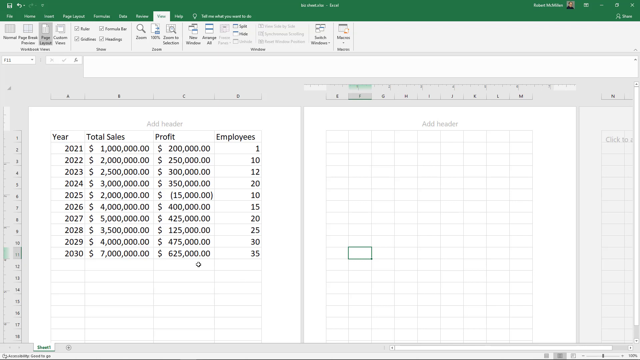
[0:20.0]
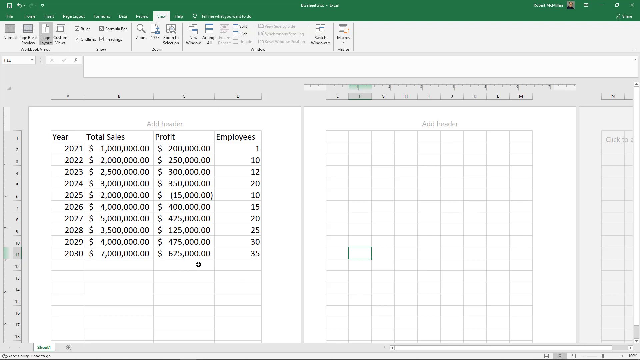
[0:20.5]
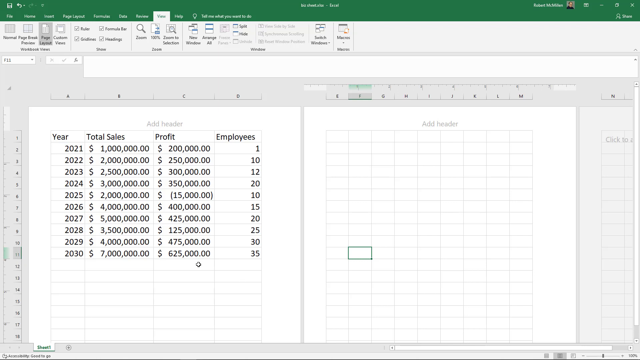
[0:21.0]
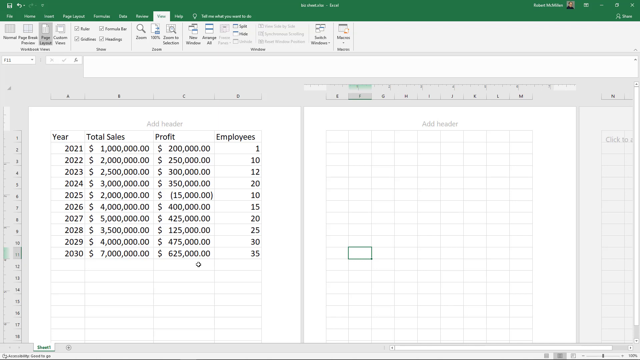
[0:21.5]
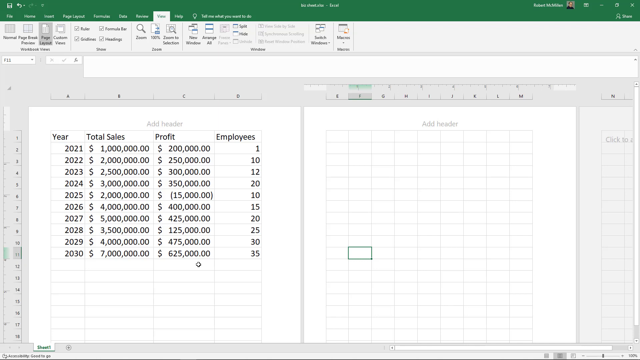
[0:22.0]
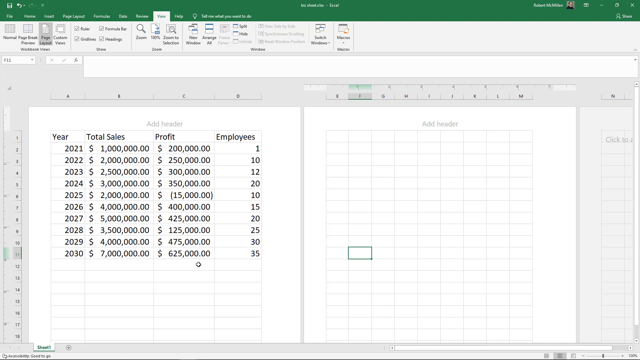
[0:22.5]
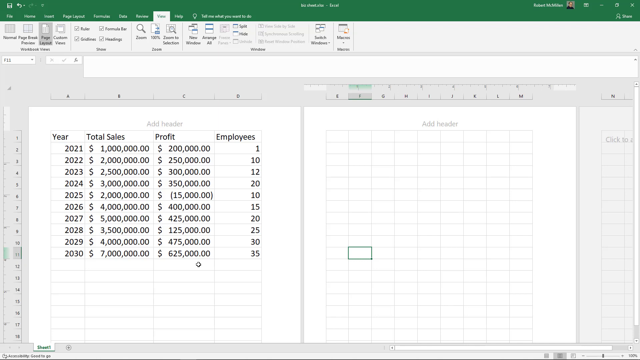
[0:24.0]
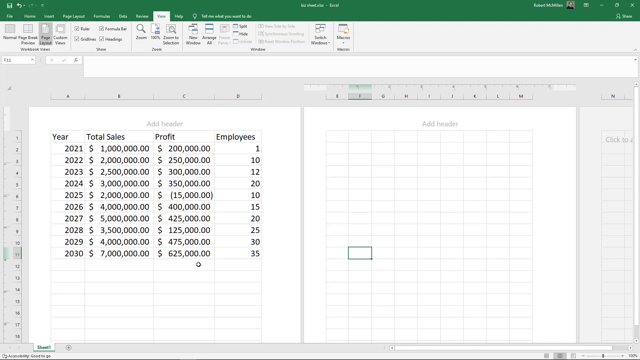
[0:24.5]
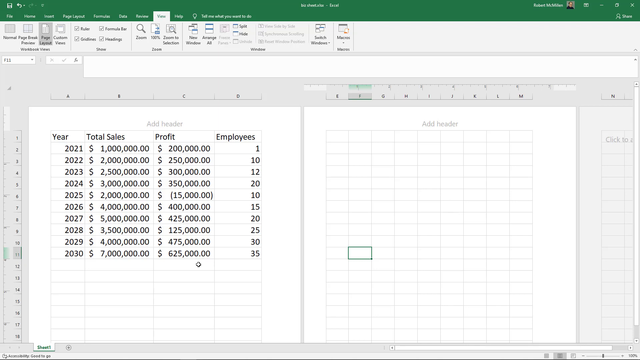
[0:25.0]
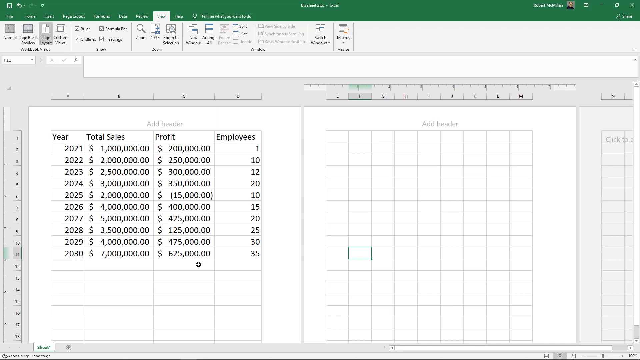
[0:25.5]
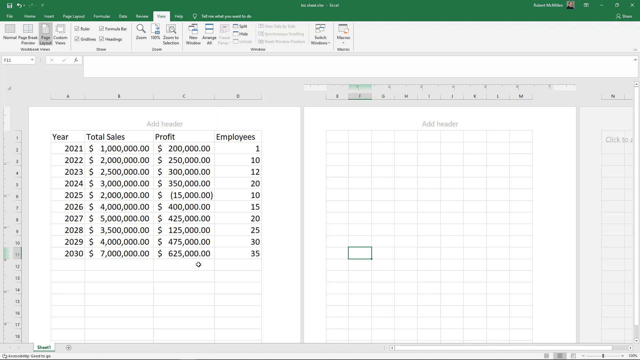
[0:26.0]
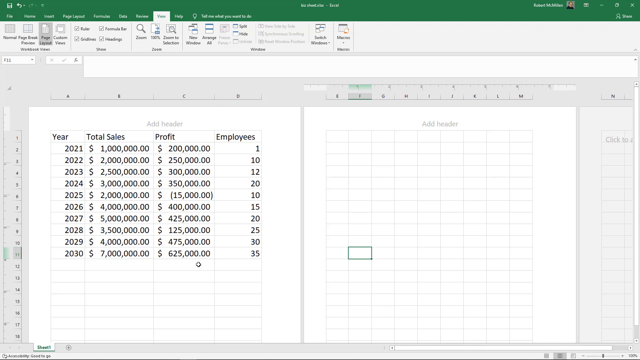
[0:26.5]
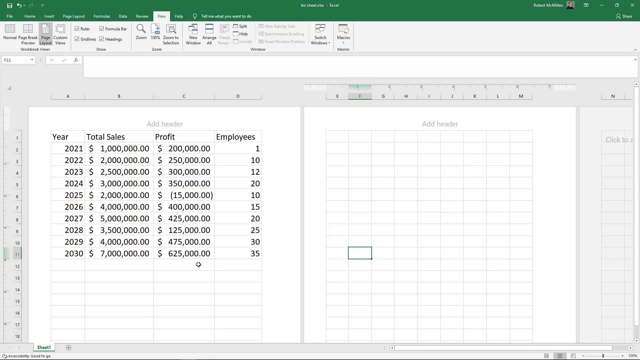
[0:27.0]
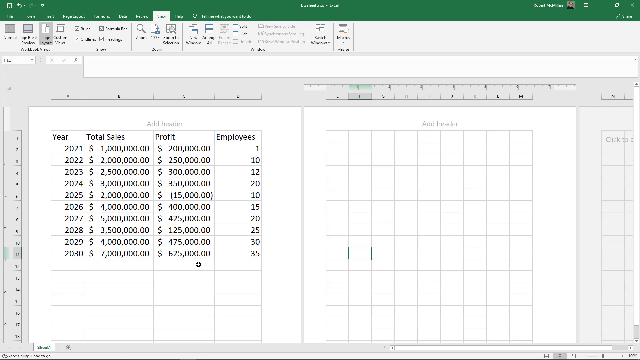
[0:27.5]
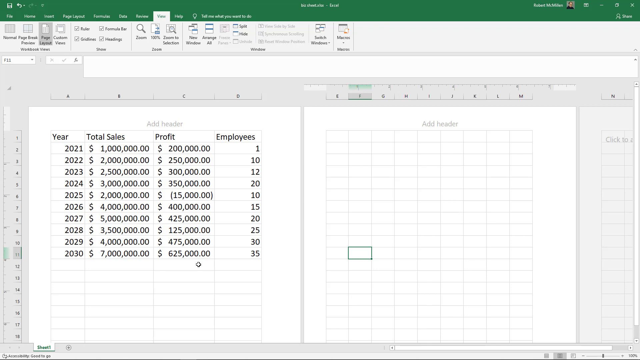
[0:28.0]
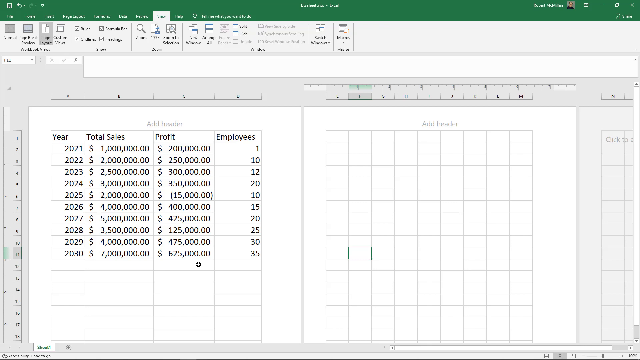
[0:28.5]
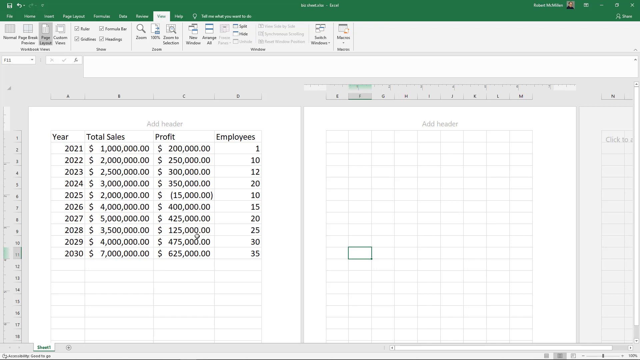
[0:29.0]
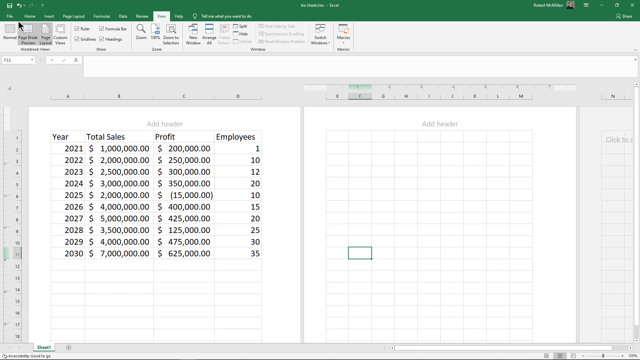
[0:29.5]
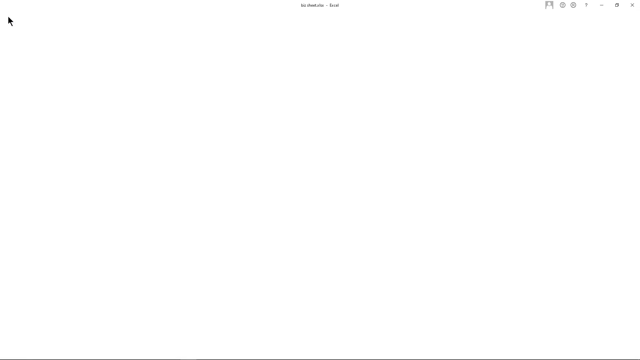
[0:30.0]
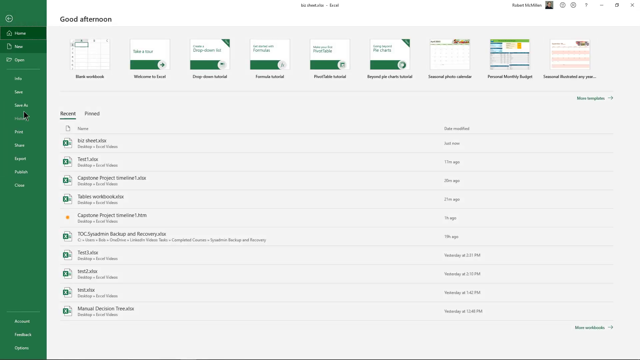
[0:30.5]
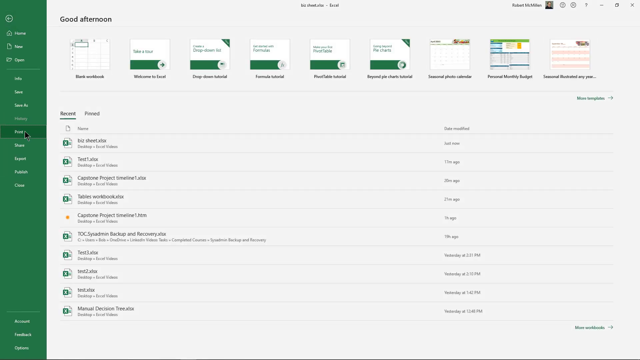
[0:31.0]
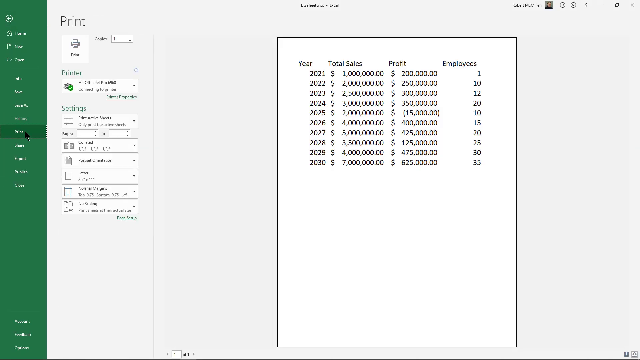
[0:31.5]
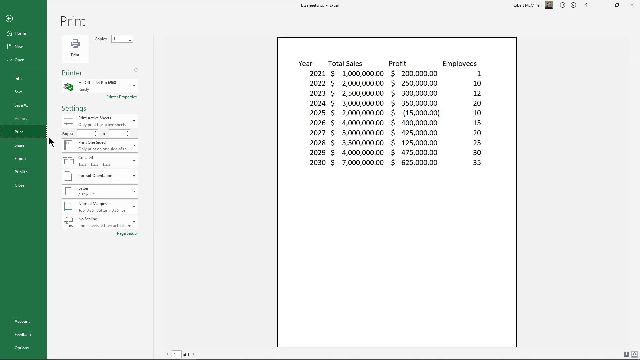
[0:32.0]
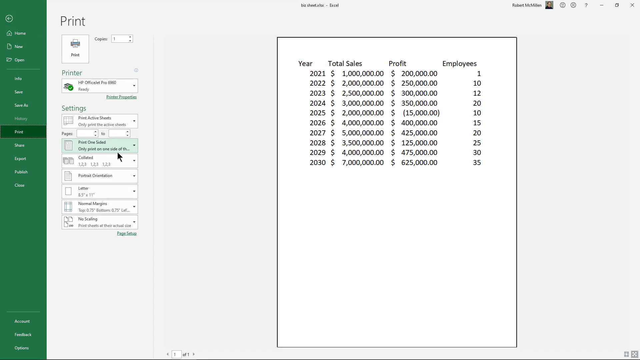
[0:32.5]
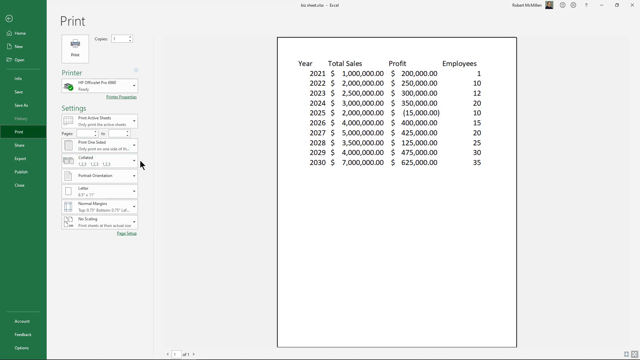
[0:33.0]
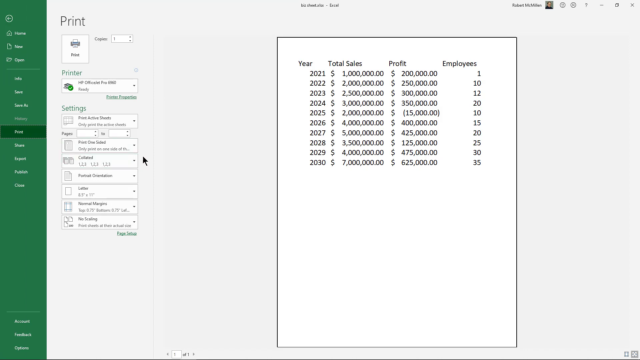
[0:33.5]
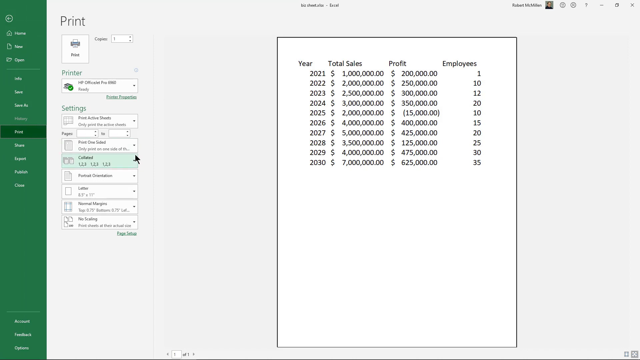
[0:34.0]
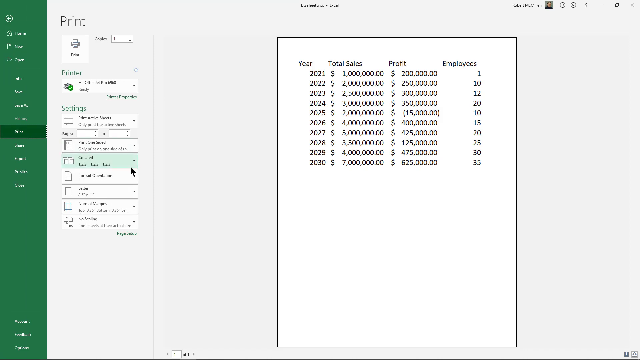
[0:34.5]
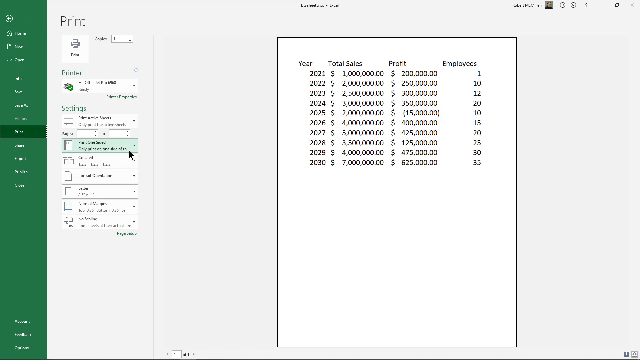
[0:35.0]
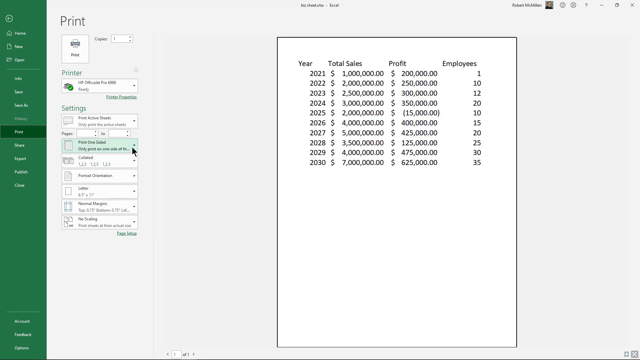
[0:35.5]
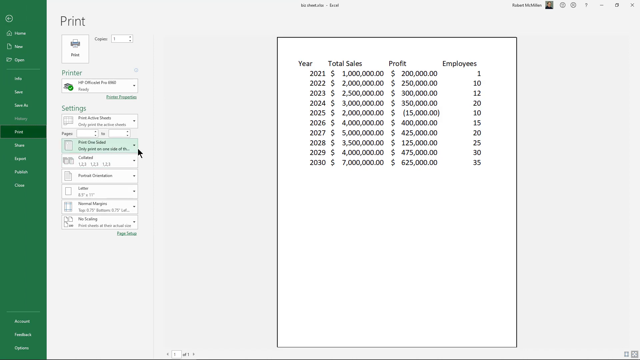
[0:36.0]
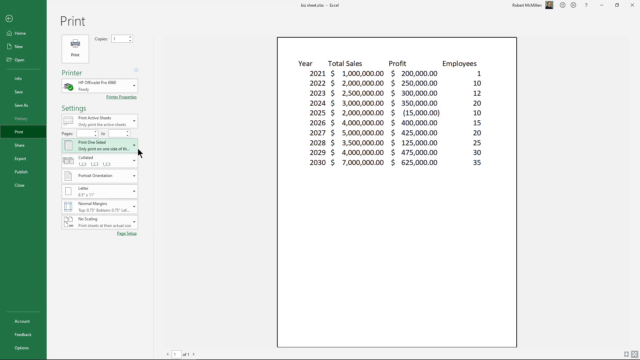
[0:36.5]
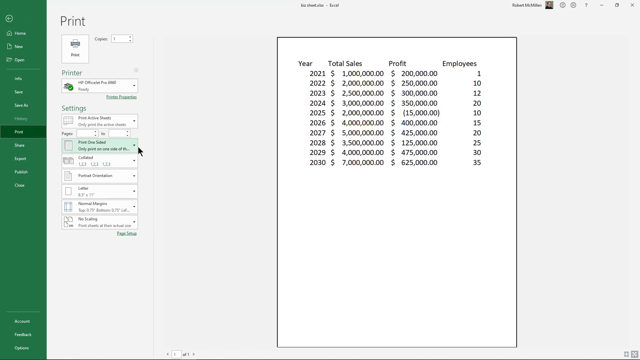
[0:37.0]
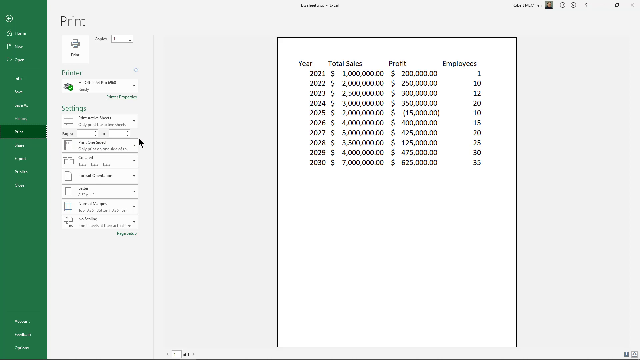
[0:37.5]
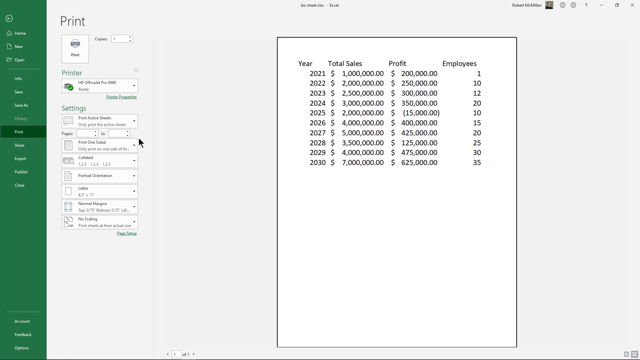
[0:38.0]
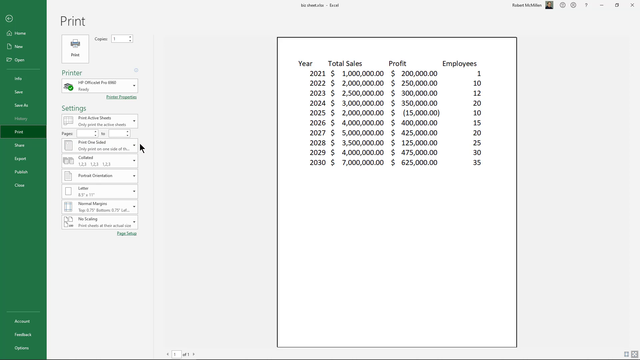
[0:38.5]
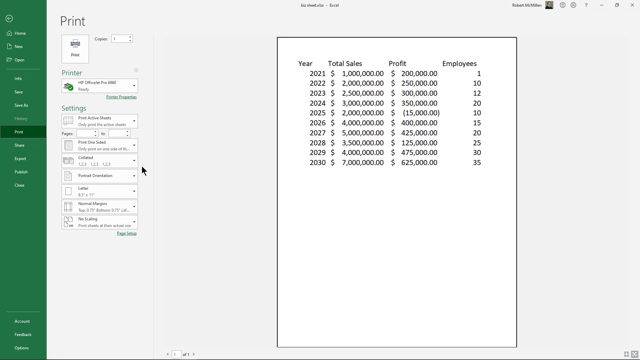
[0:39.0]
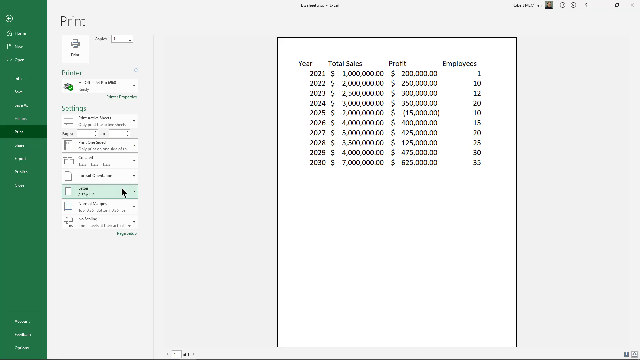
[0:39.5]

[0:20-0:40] An Excel spreadsheet seems to be divided in half. On the left side are four categories, "year", "total sales", "profit" and "employees", with years running from 2021 to 2030. On the right side is a blank spreadsheet that says "add header". A menu with a whole bunch of options runs across the top of the screen. The cursor clicks on one of the options, and a green menu with white text pops out on the left. An option is selected, and what looks like a white document pops out, displaying the information from the original spreadsheet. On the left side, "print" appears at the top with a bunch of options underneath; as the user selects one of the options, it is highlighted in light blue. The user then clicks on a drop-down menu.